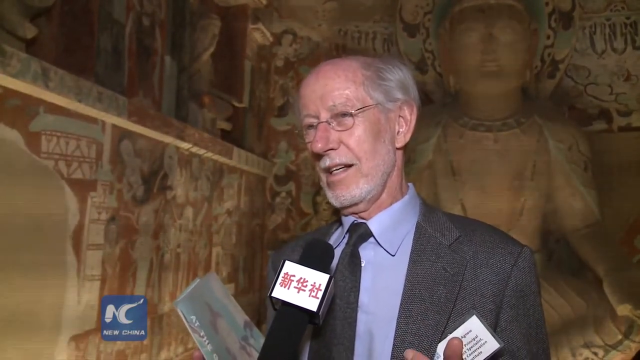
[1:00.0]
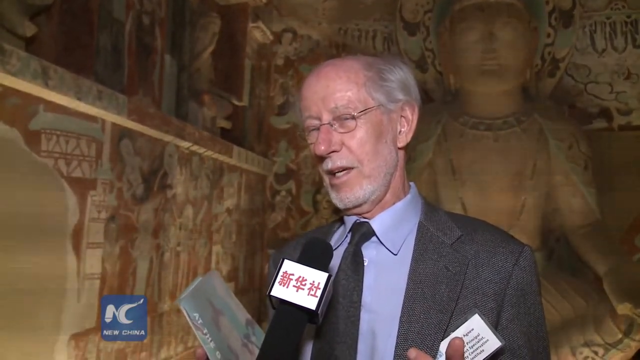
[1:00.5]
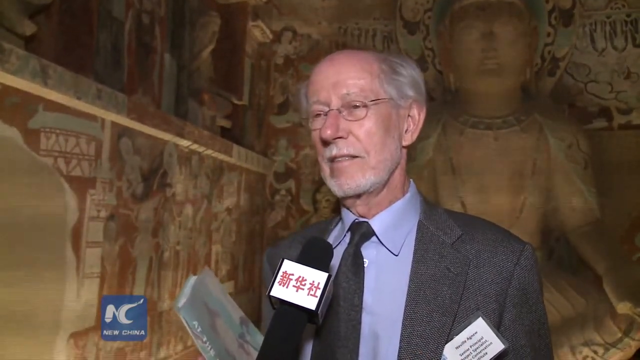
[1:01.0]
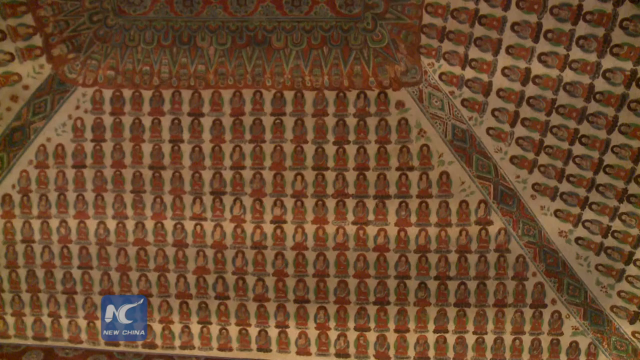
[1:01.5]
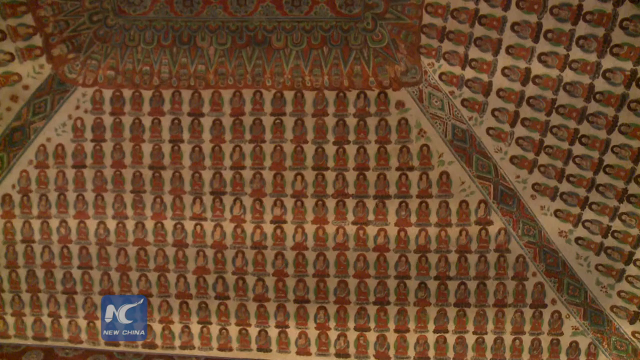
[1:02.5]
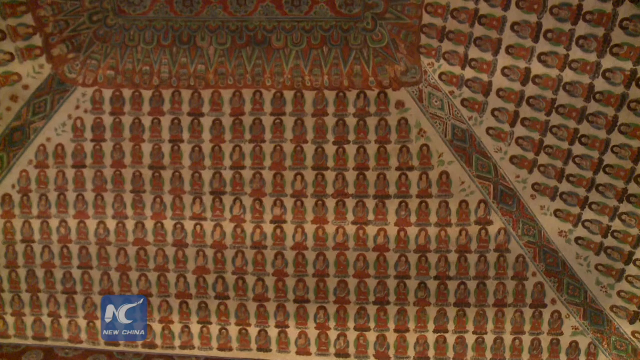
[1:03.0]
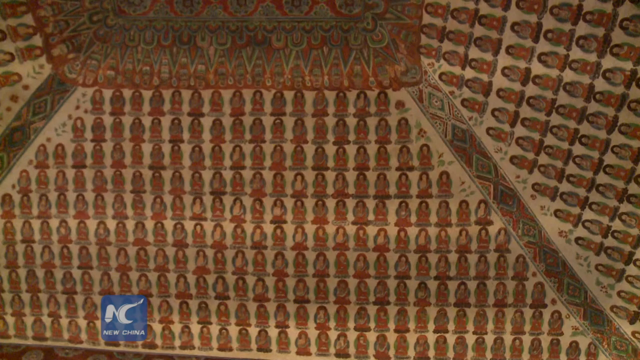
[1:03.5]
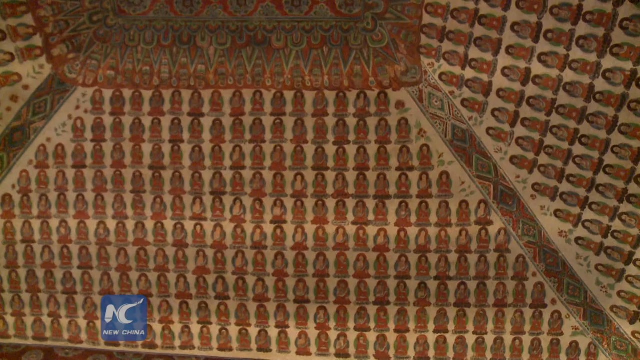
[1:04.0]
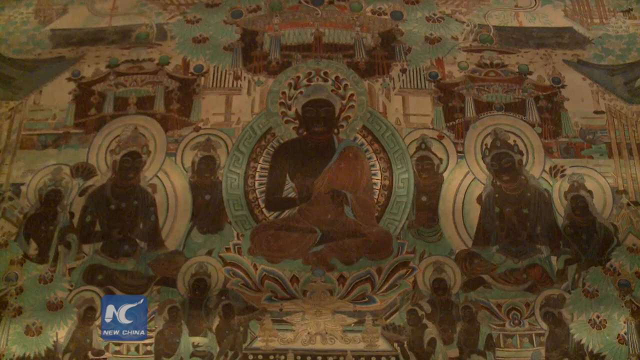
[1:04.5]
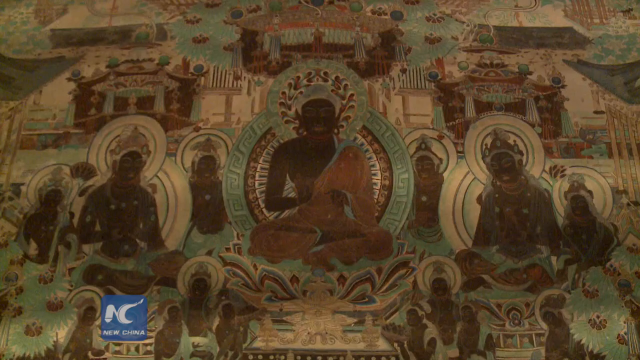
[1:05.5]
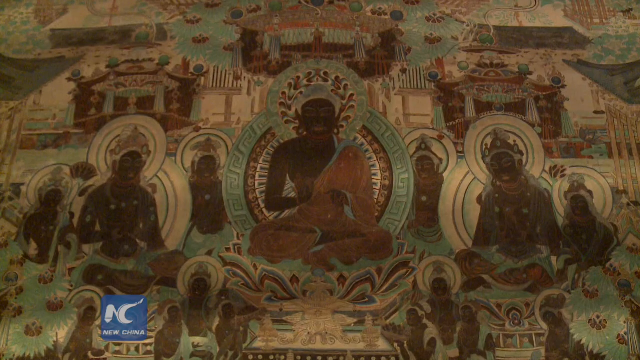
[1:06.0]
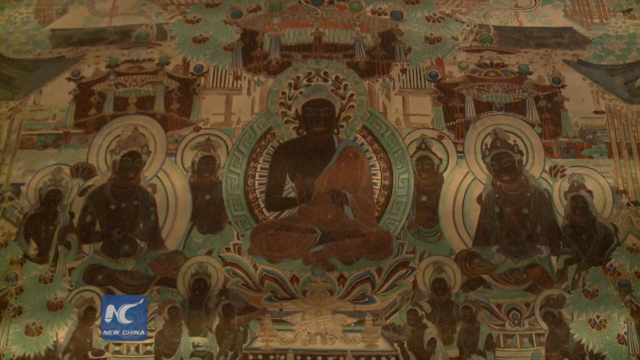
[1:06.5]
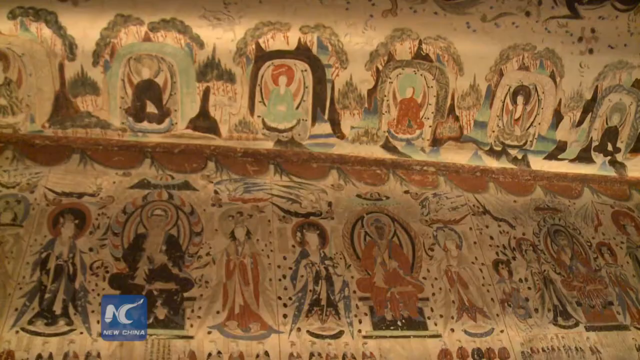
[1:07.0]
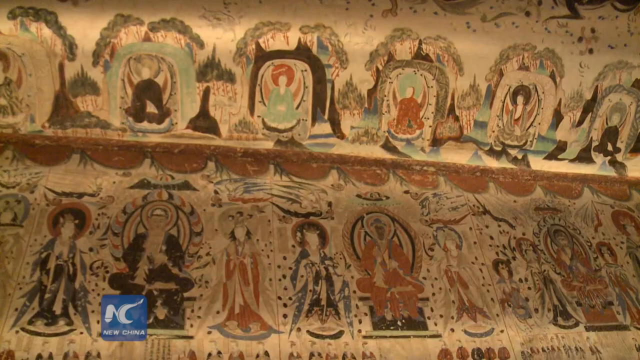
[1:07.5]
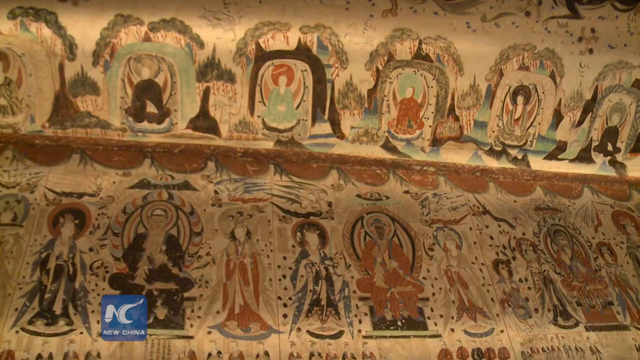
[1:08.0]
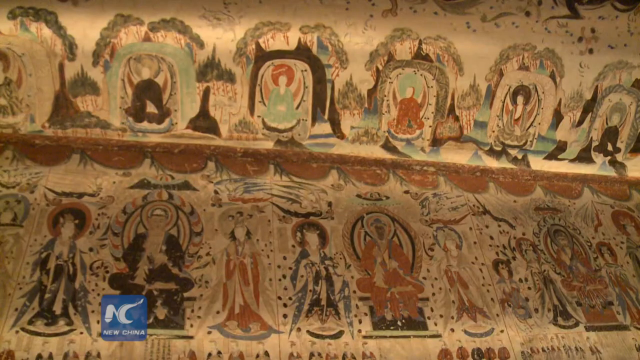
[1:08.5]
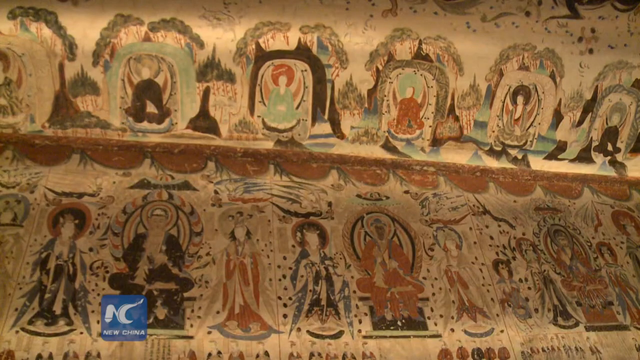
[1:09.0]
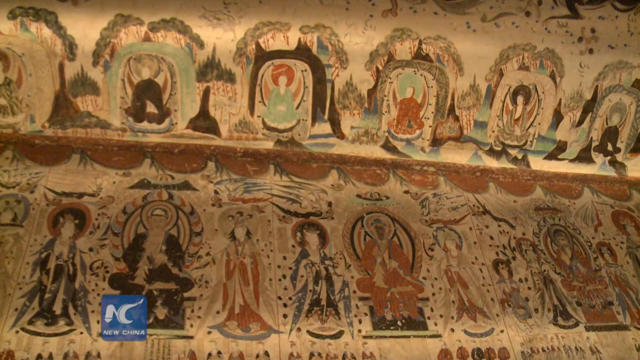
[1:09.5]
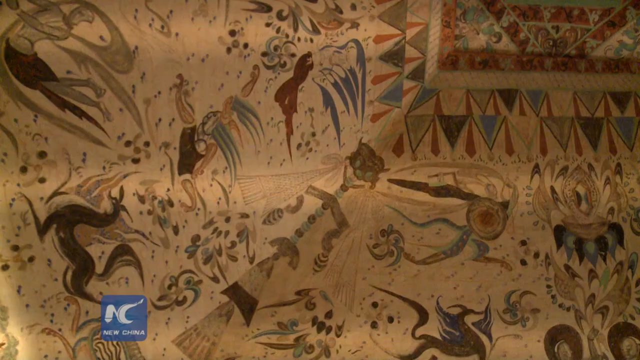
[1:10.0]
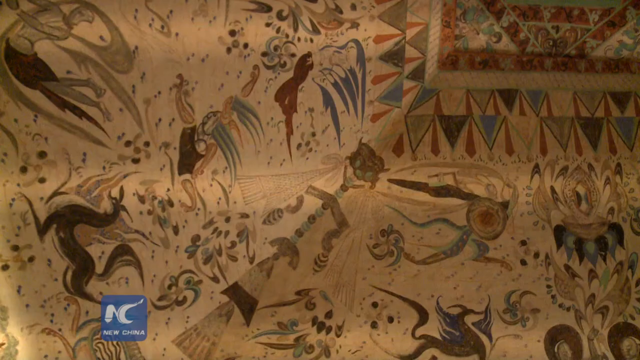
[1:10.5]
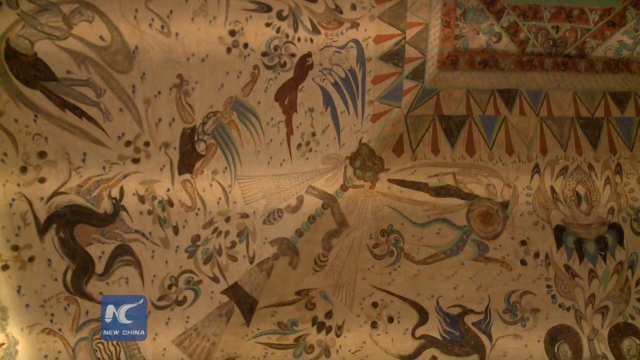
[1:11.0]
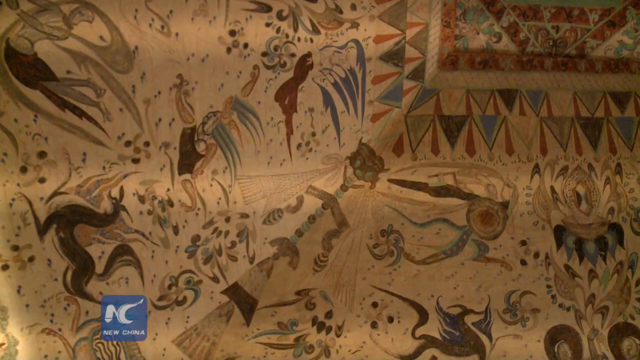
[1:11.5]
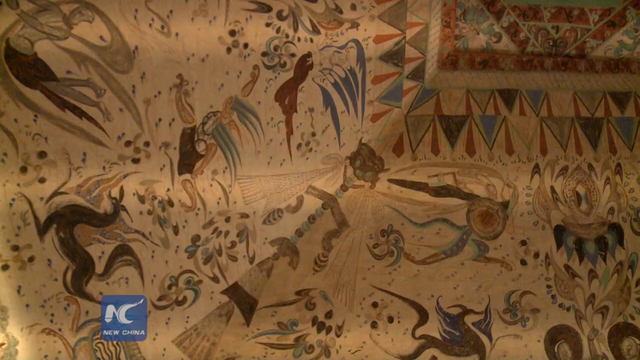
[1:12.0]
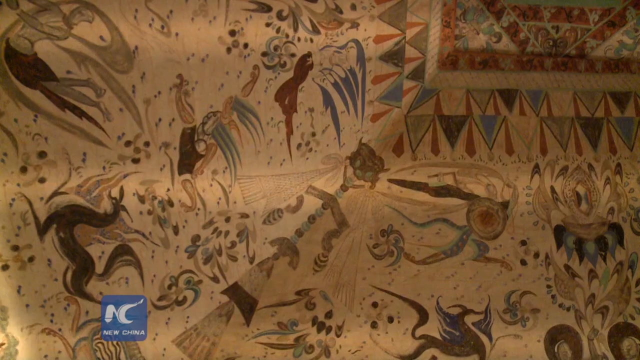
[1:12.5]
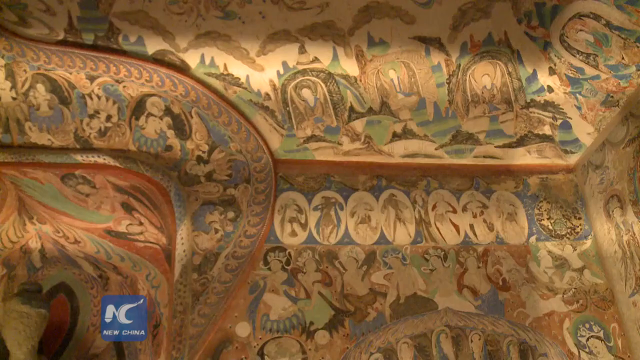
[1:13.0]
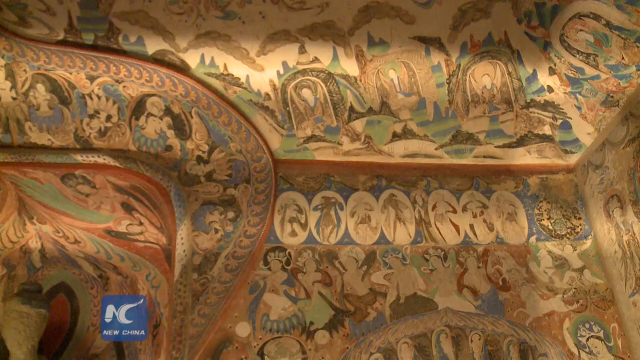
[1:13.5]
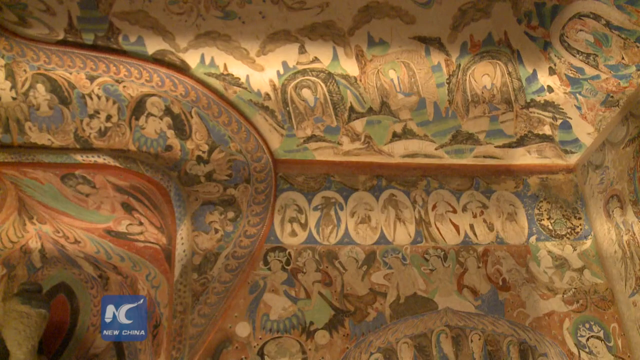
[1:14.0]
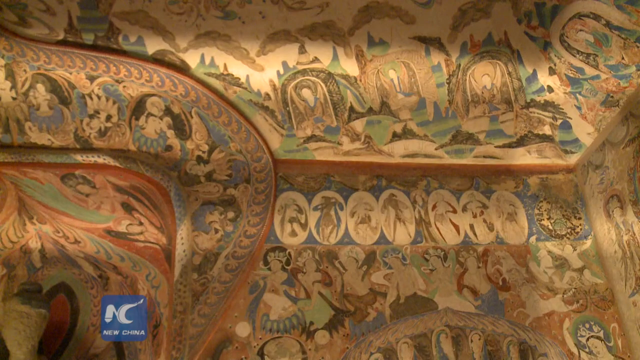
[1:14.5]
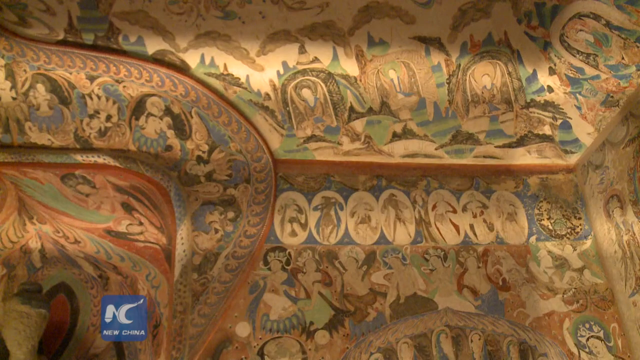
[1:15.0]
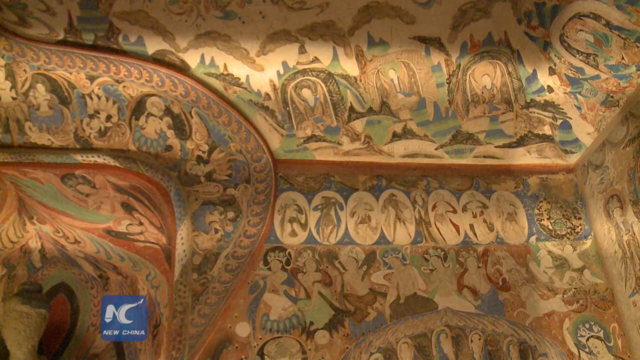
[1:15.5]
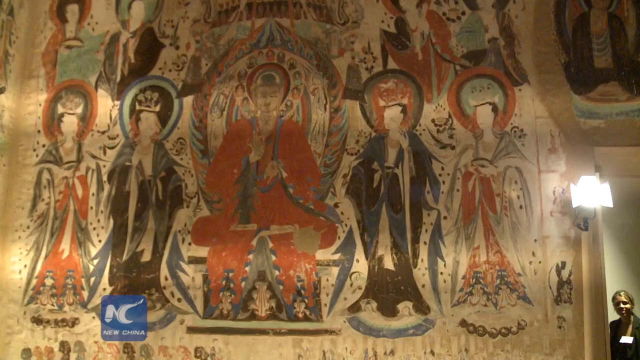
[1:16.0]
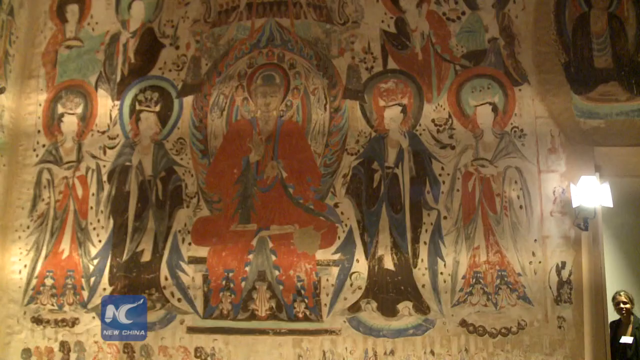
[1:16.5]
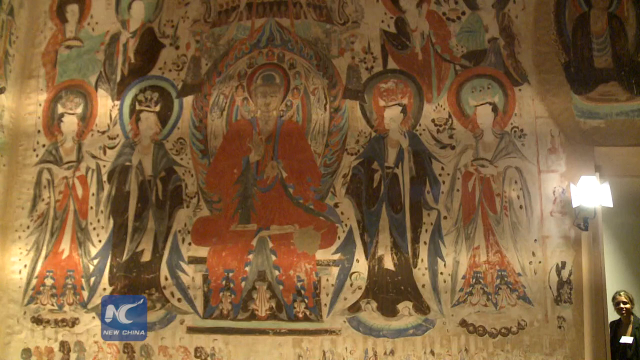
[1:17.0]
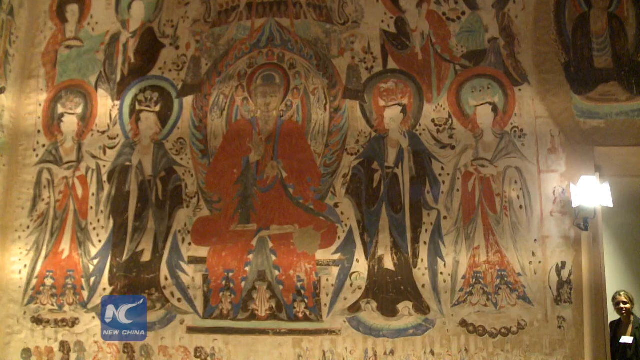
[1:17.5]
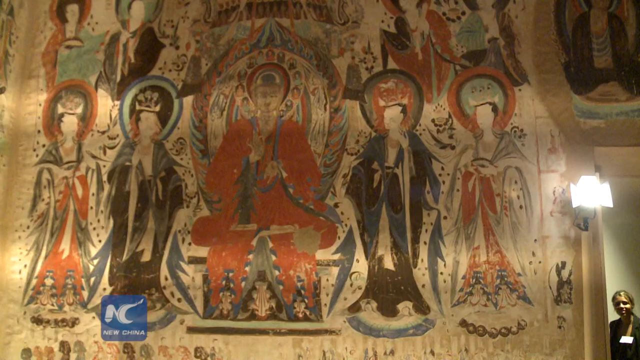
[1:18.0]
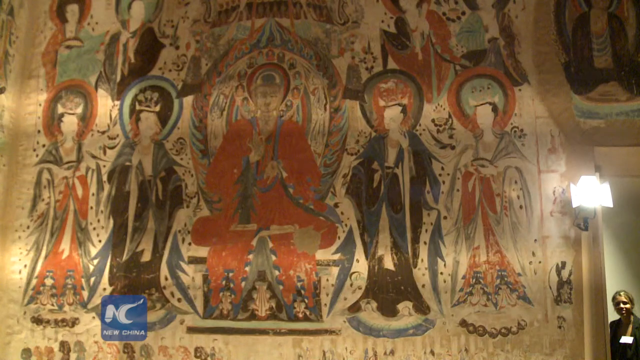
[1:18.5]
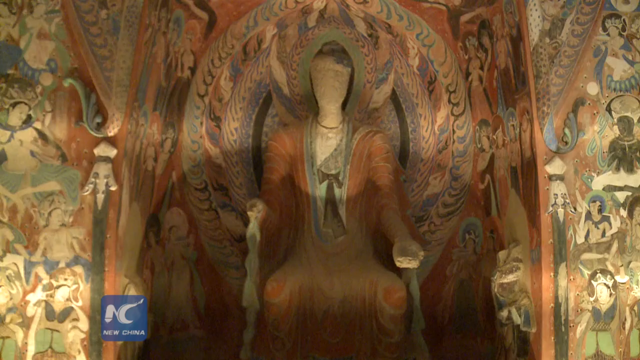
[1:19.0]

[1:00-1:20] The man continues speaking in the interview, and the channel shown is New China. The video then leaves the interview for a different set of art on what looks like a ceiling: hundreds and hundreds of drawings of what seem to be different people, all drawn in the same style, covering the wall or ceiling; the camera's perspective makes it hard to tell which. A quick sequence of different artworks across the museum follows, all very detailed and very well preserved, though their meaning is hard to tell.